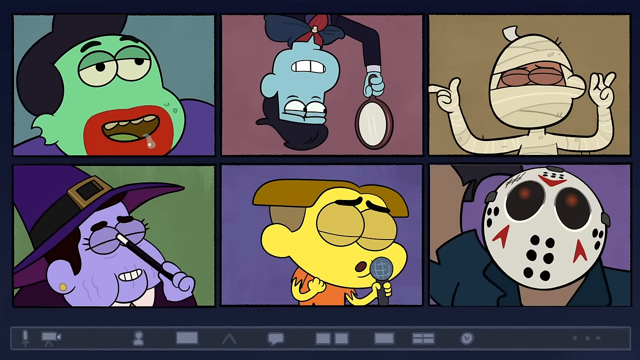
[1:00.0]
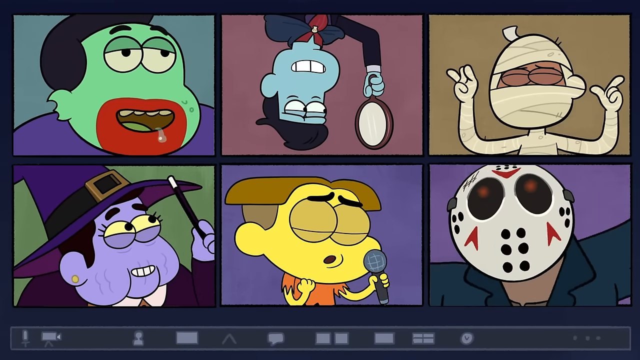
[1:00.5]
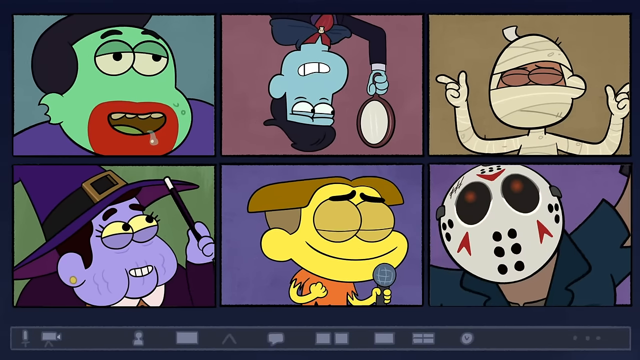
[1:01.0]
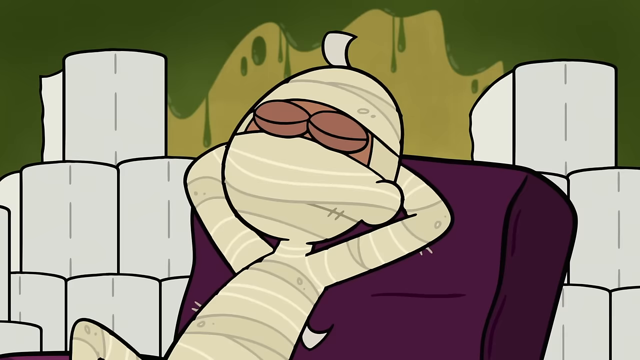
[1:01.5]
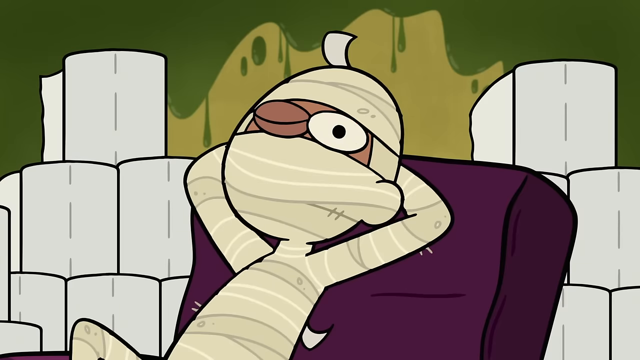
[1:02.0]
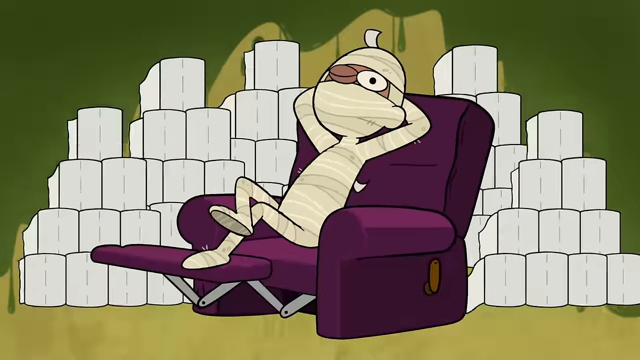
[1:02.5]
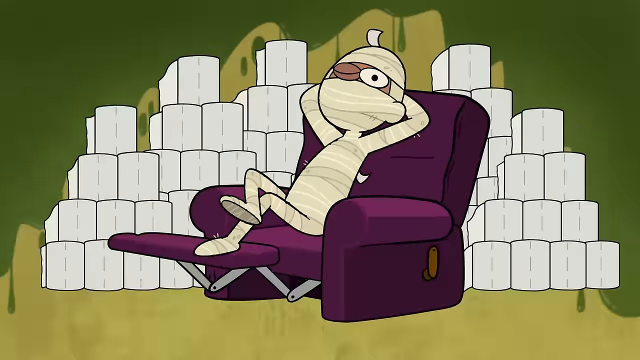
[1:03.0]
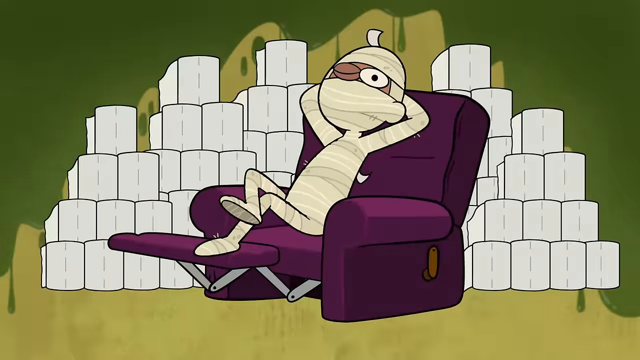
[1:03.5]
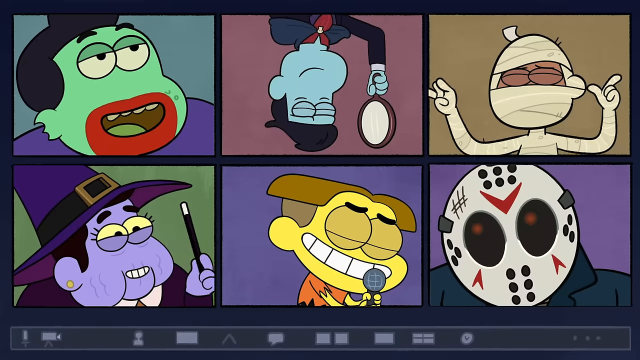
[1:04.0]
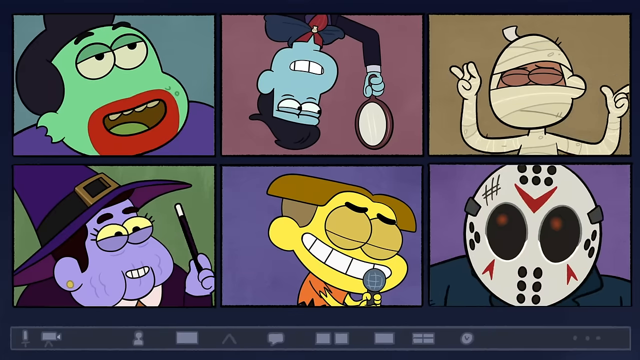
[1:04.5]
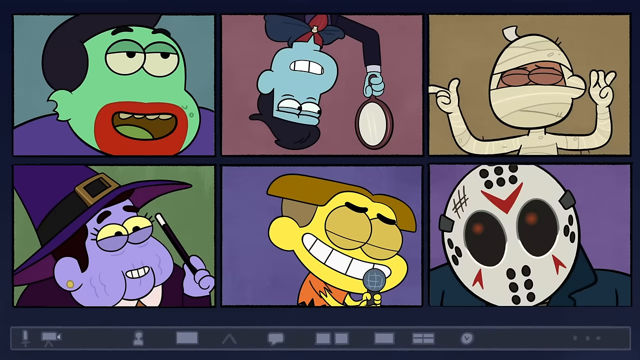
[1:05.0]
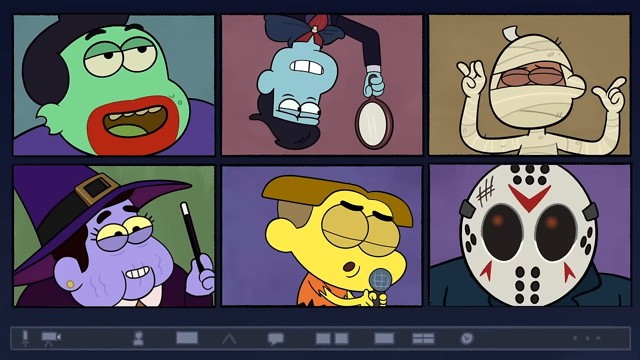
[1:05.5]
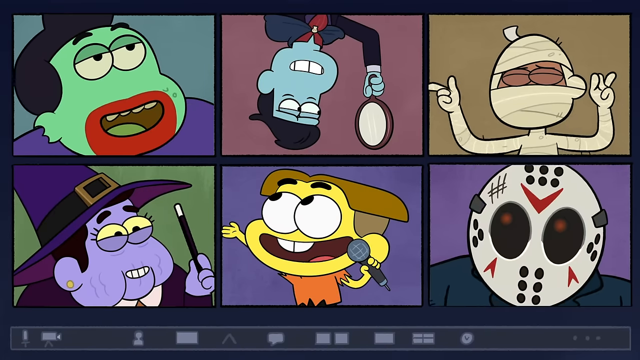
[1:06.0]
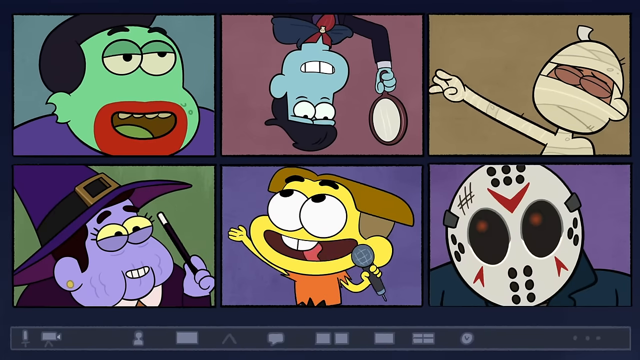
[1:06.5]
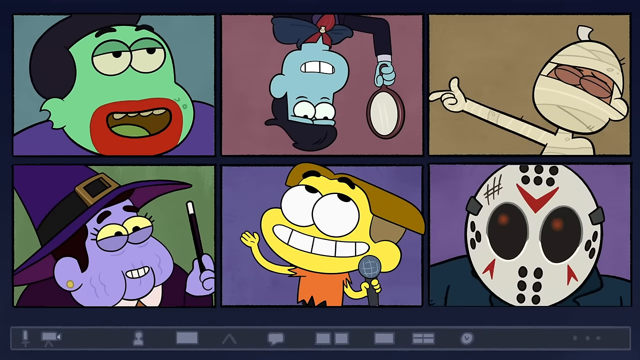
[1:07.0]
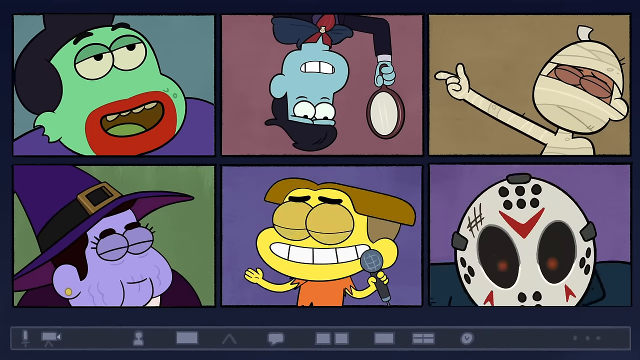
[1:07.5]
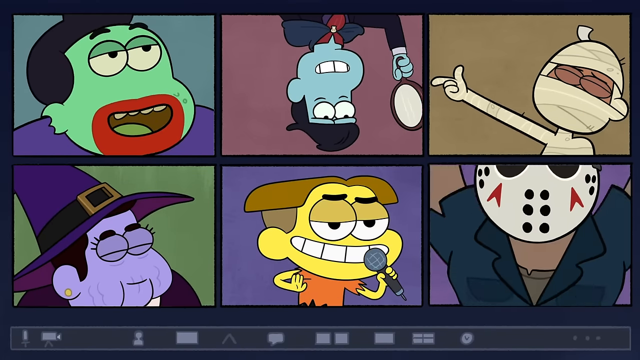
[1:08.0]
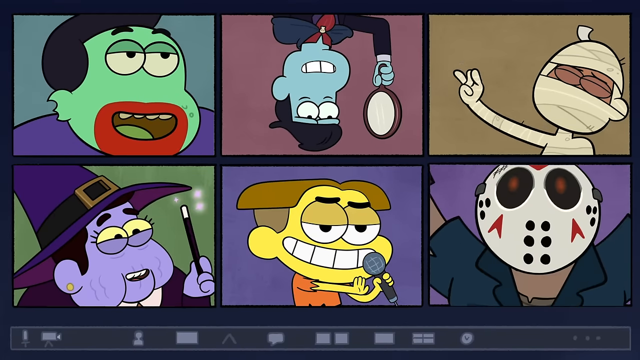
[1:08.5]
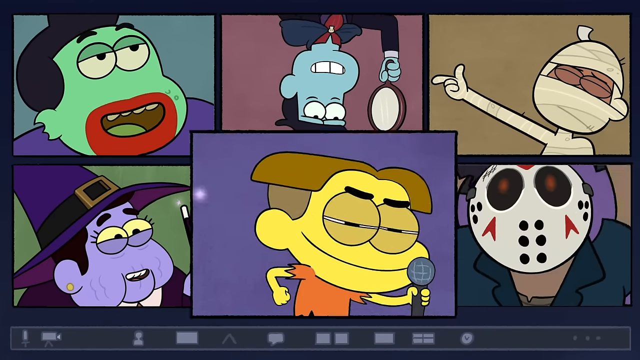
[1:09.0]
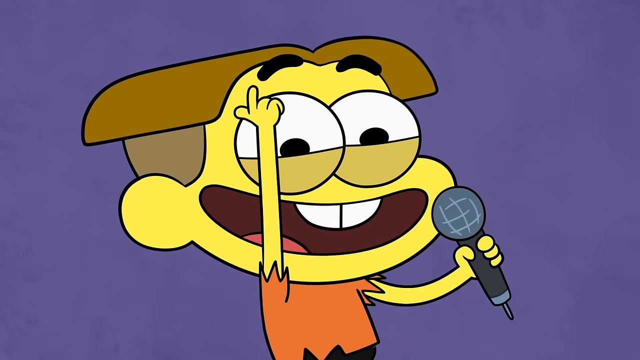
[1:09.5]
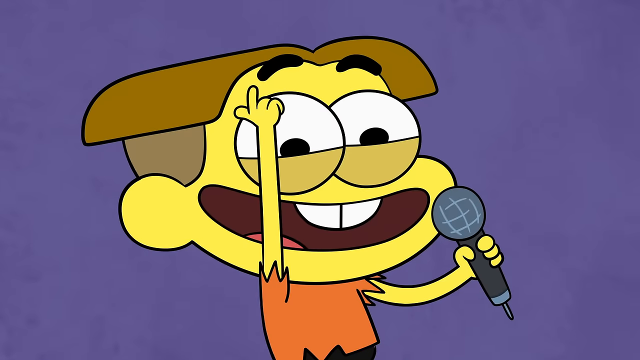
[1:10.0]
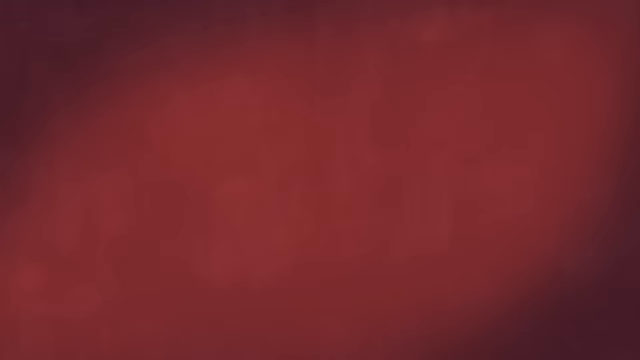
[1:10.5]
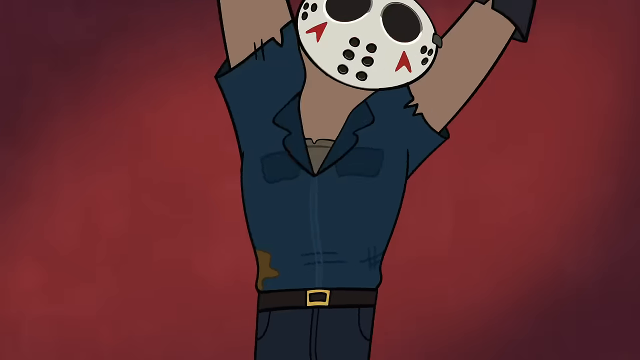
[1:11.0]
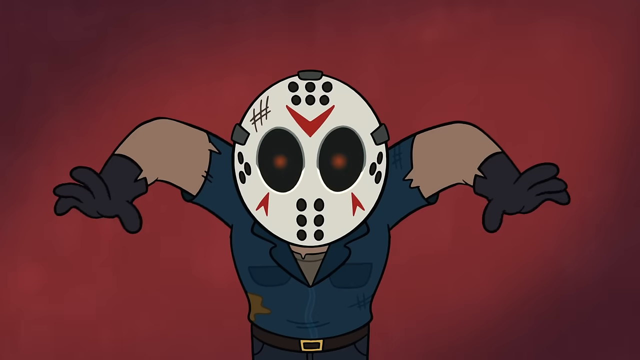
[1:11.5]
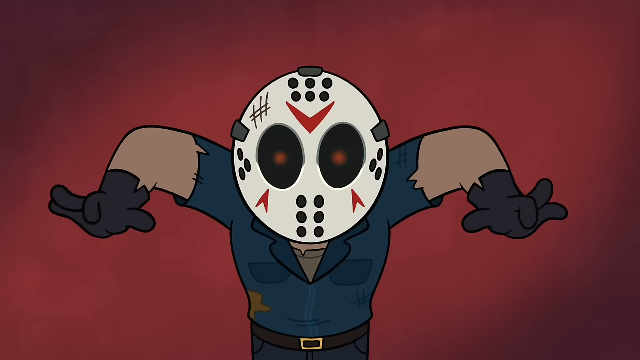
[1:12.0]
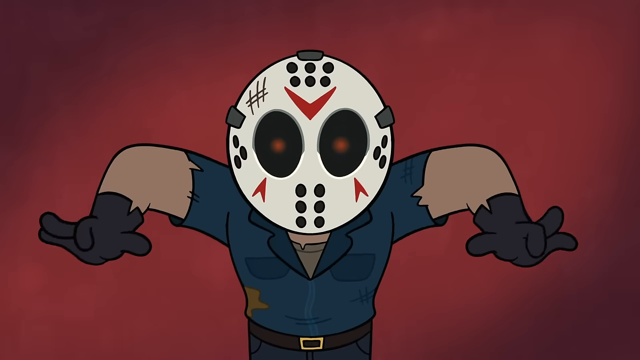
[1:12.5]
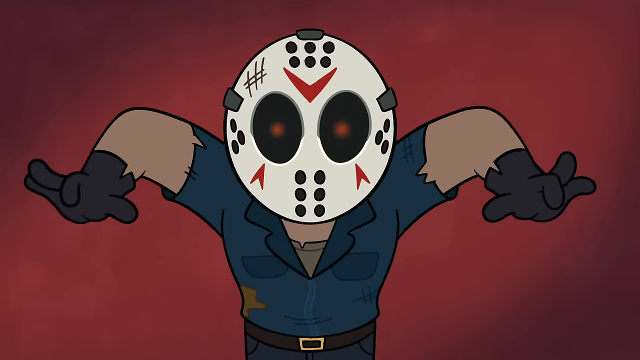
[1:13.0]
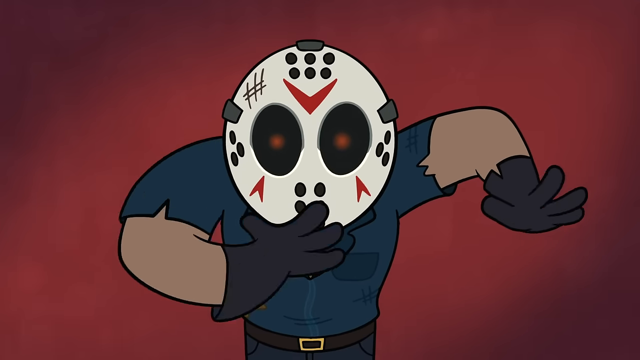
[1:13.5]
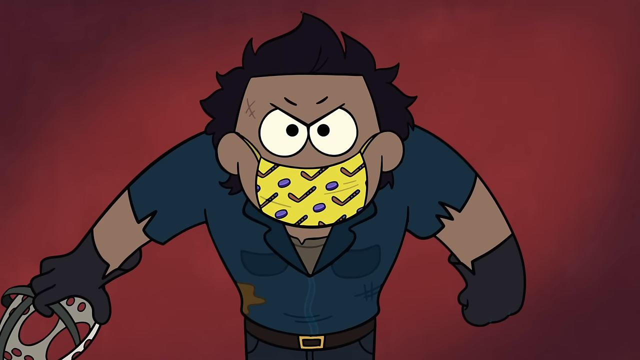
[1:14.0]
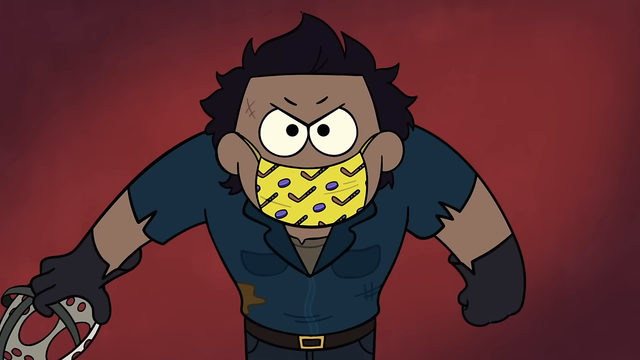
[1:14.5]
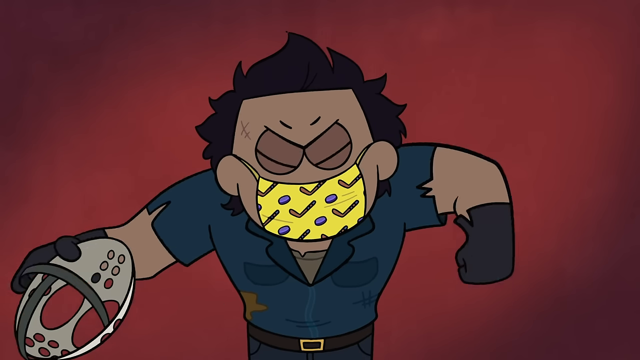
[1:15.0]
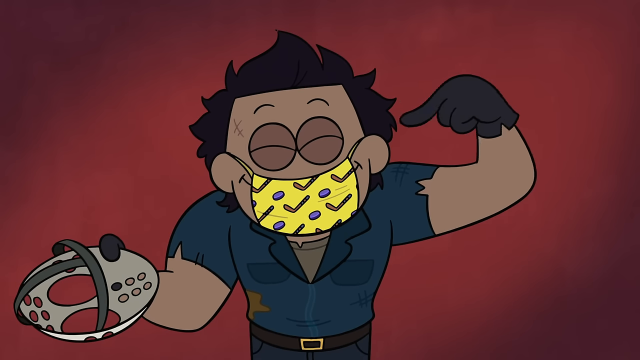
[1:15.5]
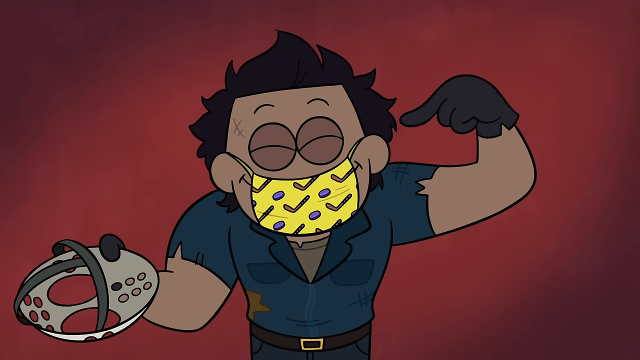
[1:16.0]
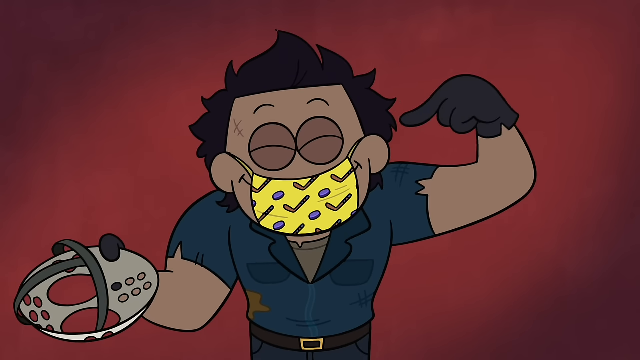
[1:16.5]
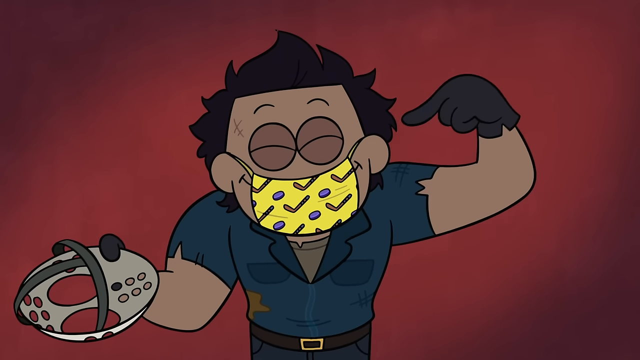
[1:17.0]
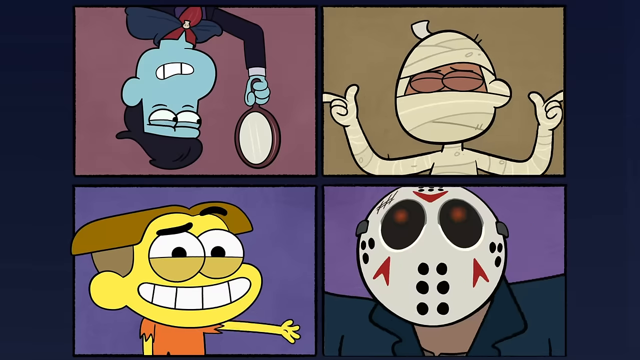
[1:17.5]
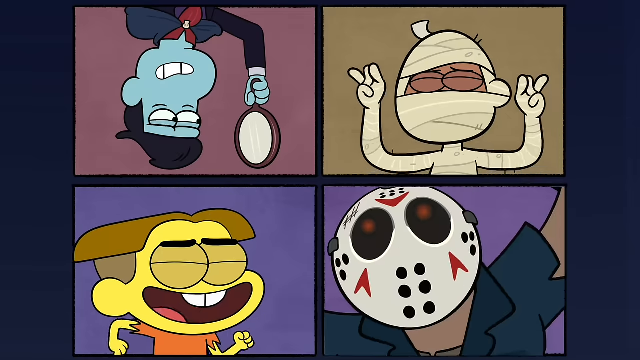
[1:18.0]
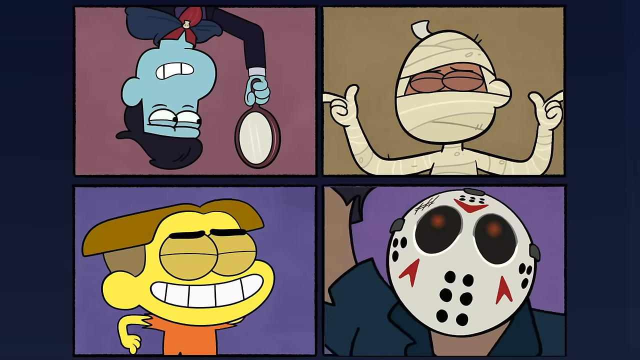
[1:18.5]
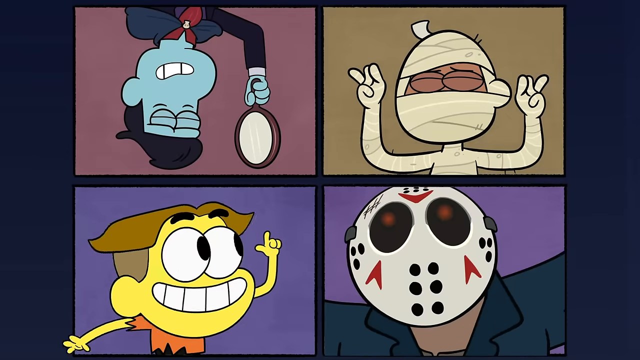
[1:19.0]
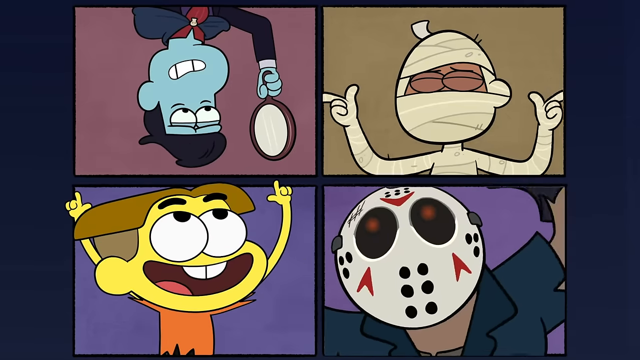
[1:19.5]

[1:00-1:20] The six appear to be singing a song together, all kind of swaying back and forth as if each contributes a piece to the song. The child still holds the microphone in his left hand and still wears the tattered clothing as Frankenstein, but no longer has the mask on. The video cuts to each person as they apparently sing their verse: Freddy Krueger sings, then it cuts back to the Zoom call where they are all singing collectively, then to the zombie on the treadmill singing his part, then to Dracula singing his part. The camera cuts to and from each individual member, maybe for solos or maybe just showing each one singing their portion of the song.